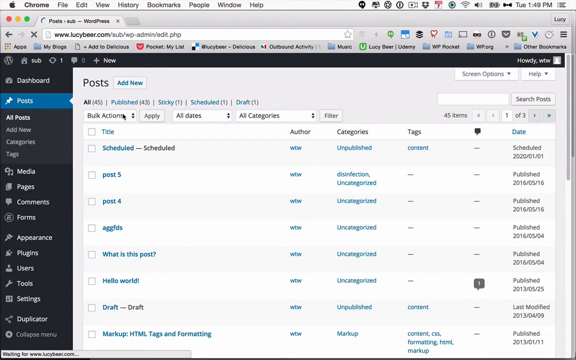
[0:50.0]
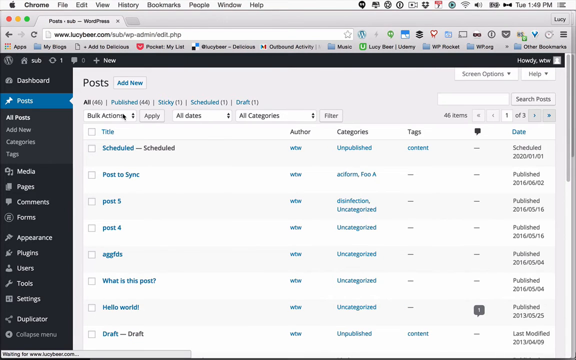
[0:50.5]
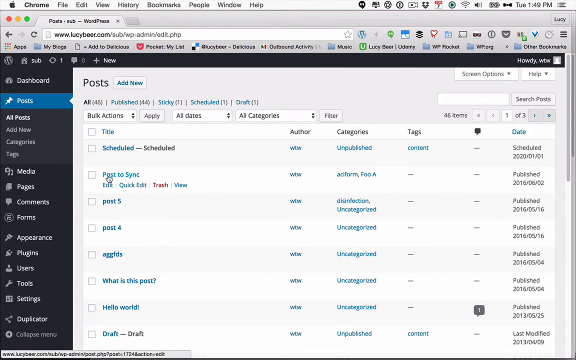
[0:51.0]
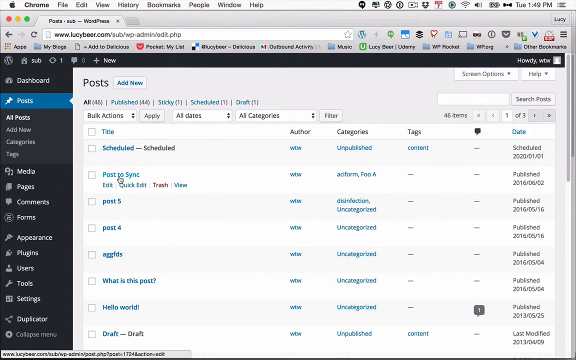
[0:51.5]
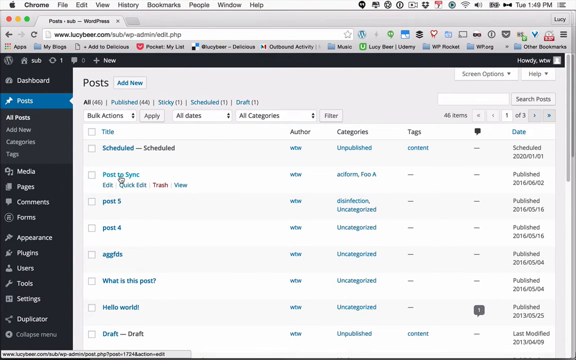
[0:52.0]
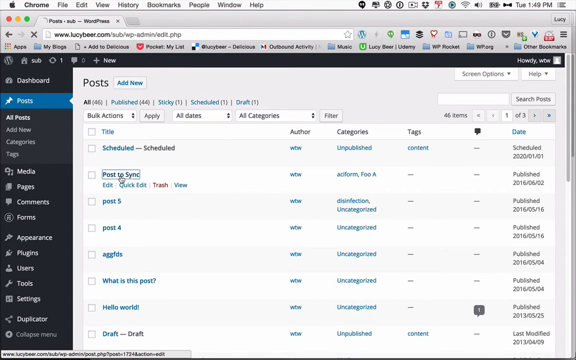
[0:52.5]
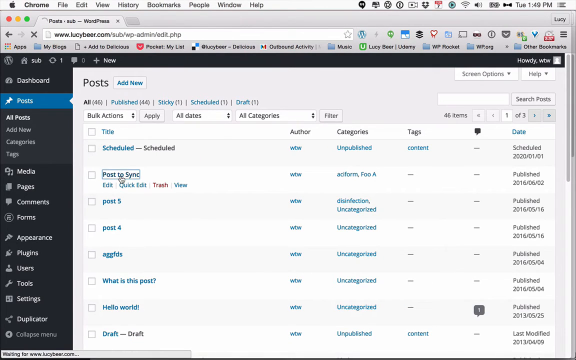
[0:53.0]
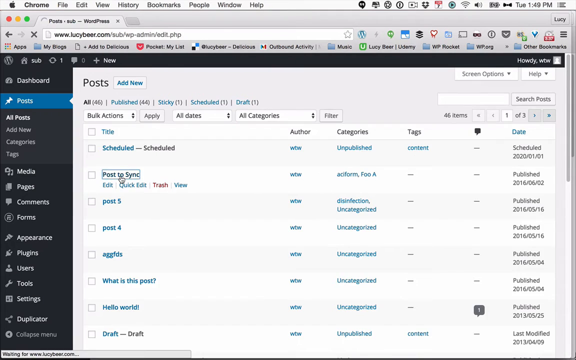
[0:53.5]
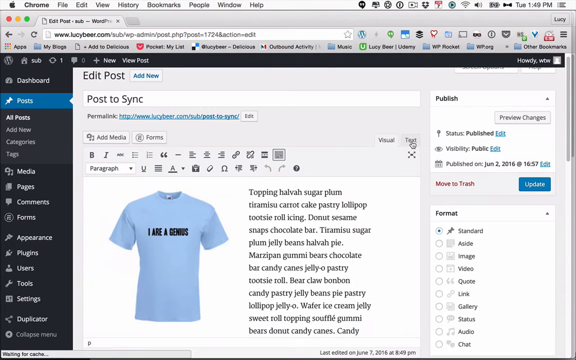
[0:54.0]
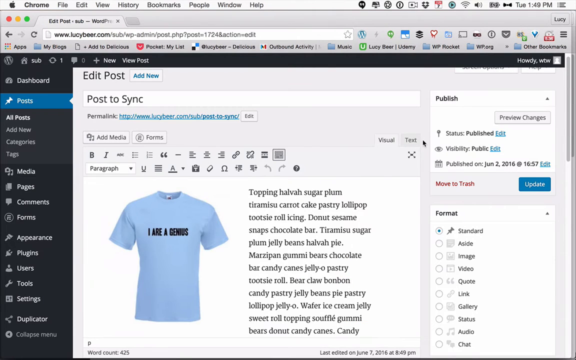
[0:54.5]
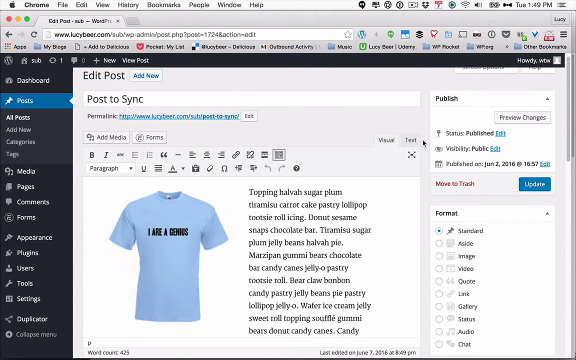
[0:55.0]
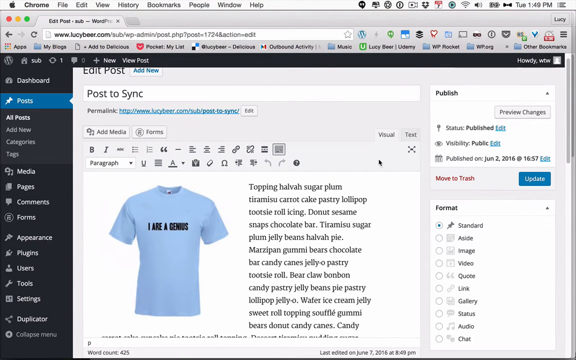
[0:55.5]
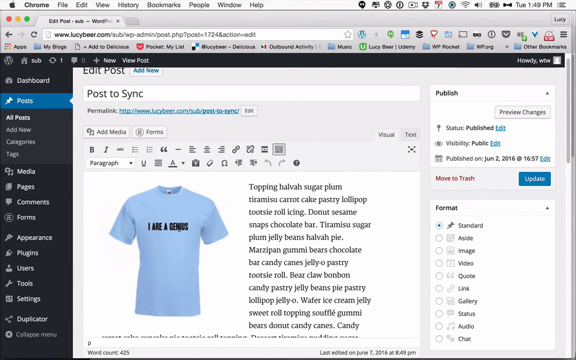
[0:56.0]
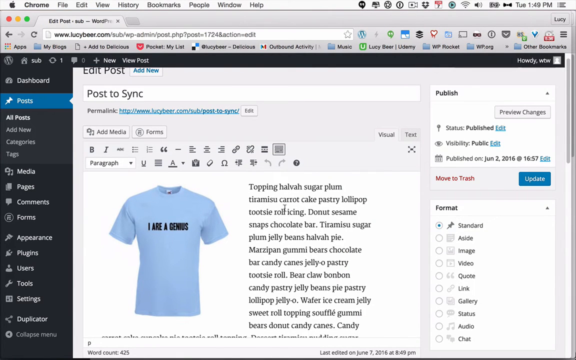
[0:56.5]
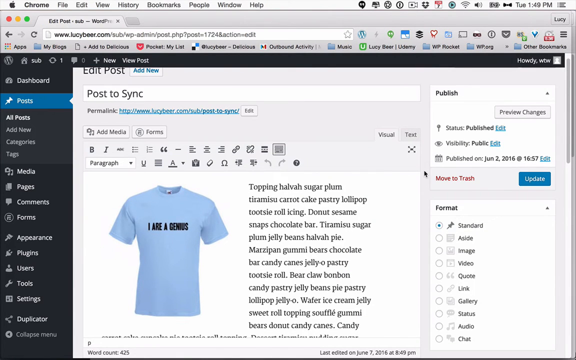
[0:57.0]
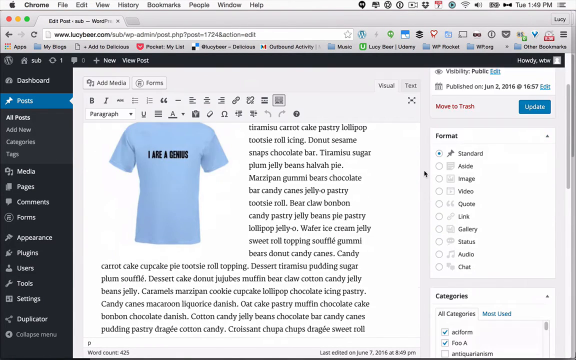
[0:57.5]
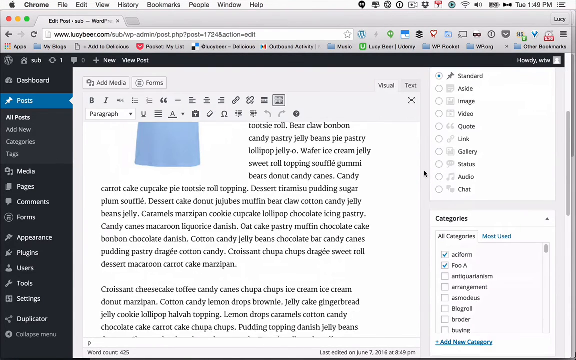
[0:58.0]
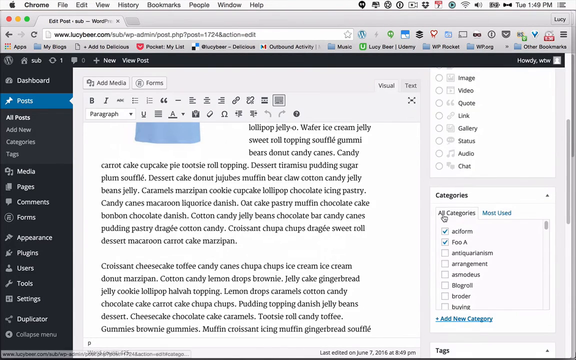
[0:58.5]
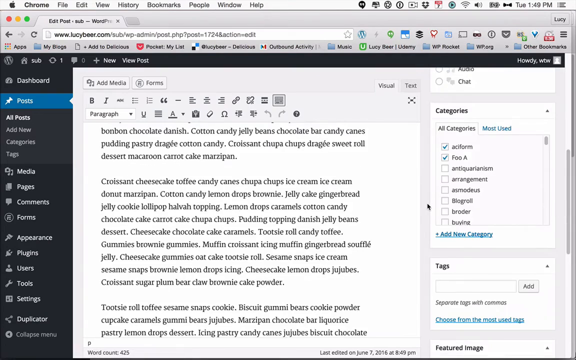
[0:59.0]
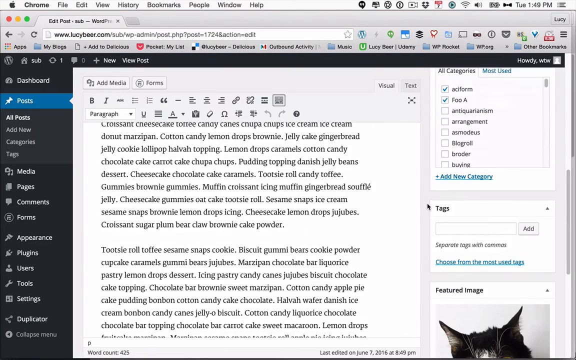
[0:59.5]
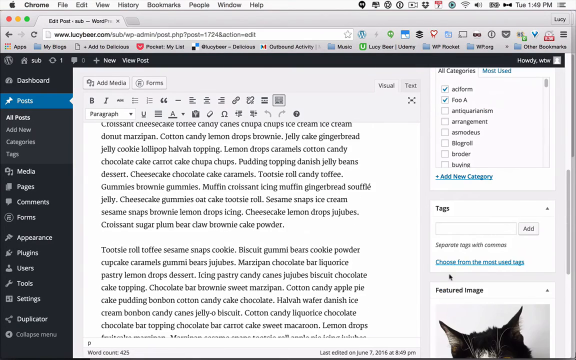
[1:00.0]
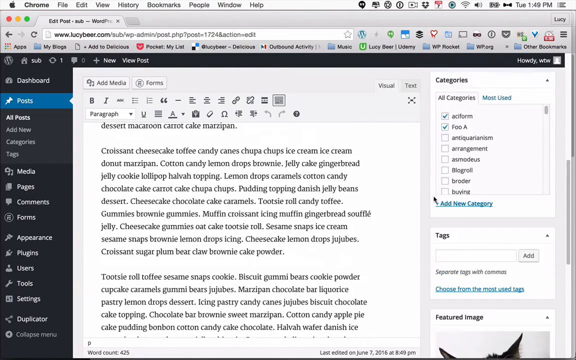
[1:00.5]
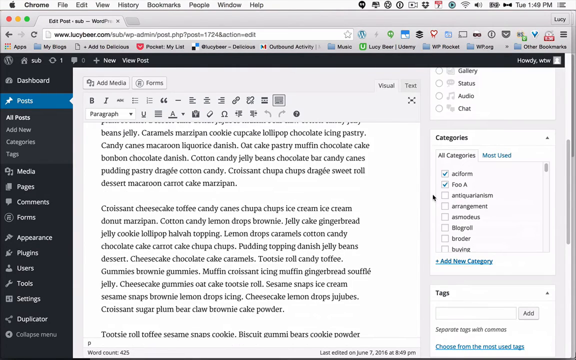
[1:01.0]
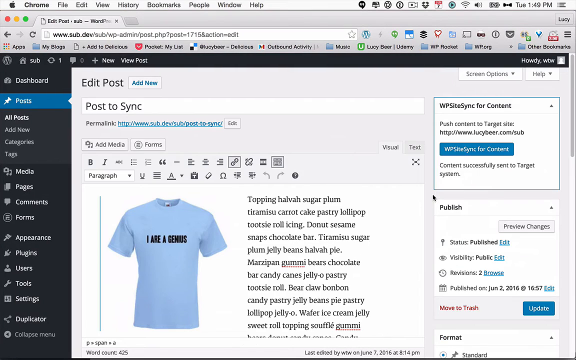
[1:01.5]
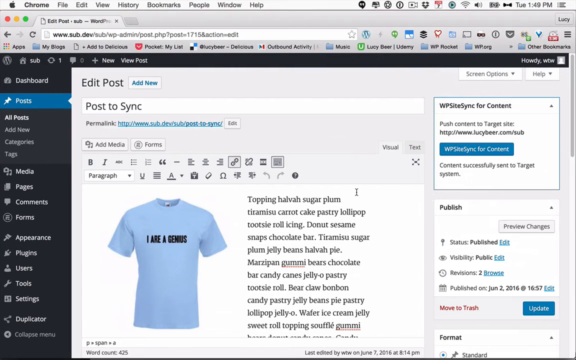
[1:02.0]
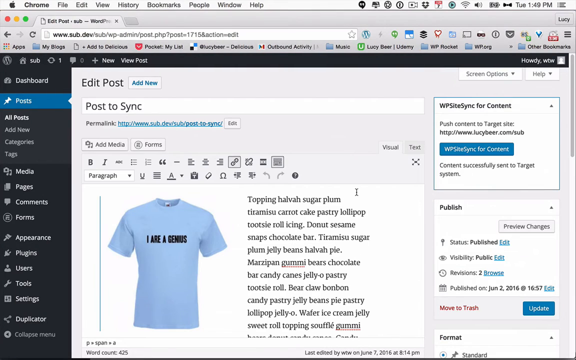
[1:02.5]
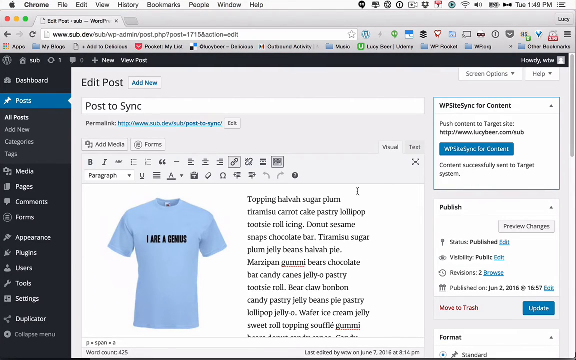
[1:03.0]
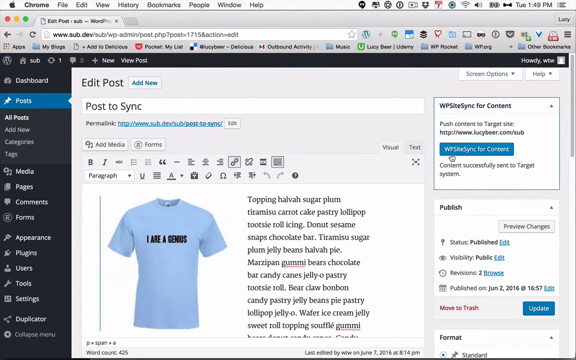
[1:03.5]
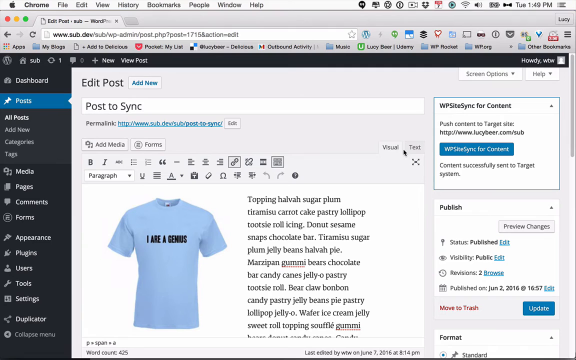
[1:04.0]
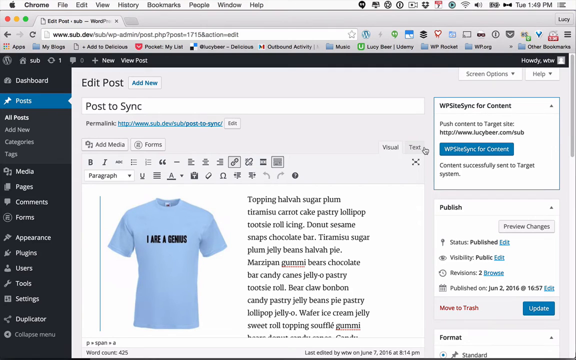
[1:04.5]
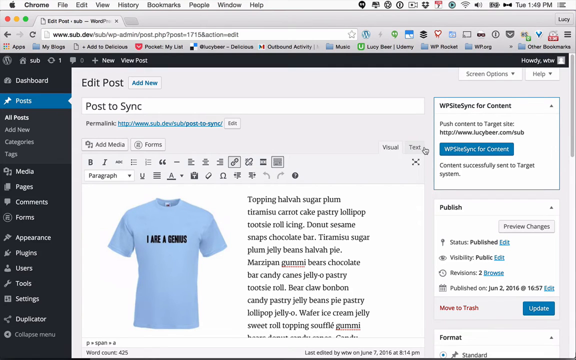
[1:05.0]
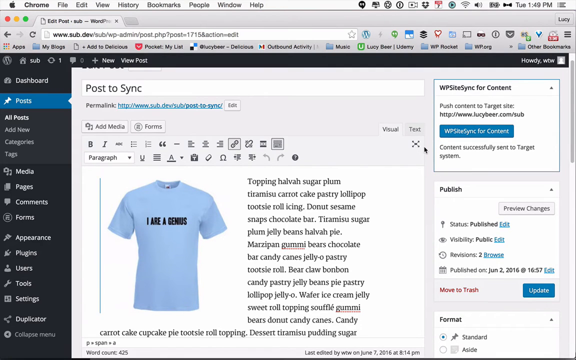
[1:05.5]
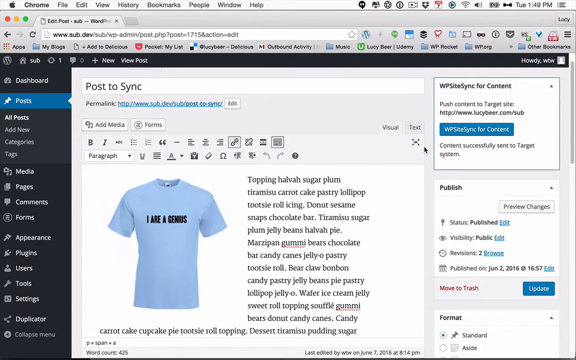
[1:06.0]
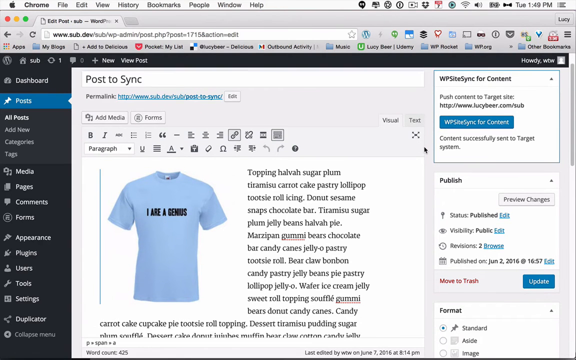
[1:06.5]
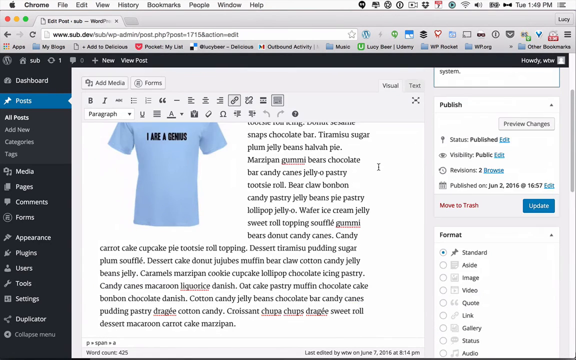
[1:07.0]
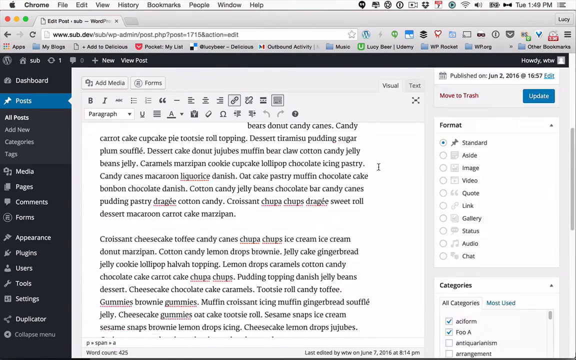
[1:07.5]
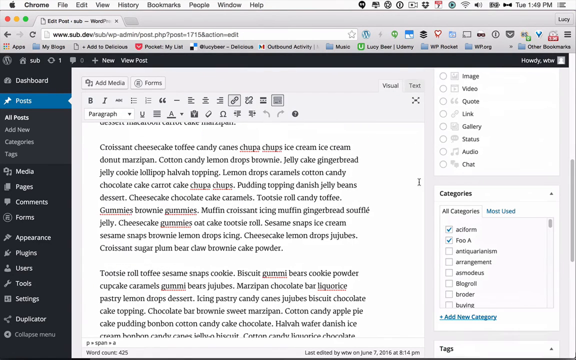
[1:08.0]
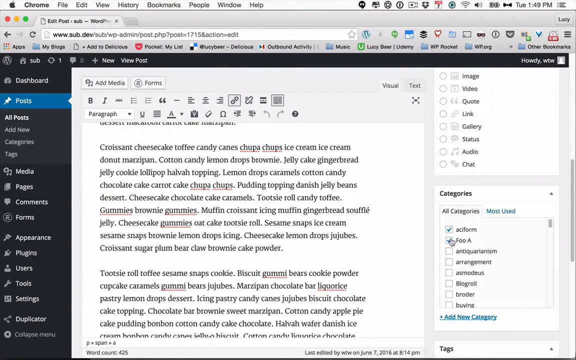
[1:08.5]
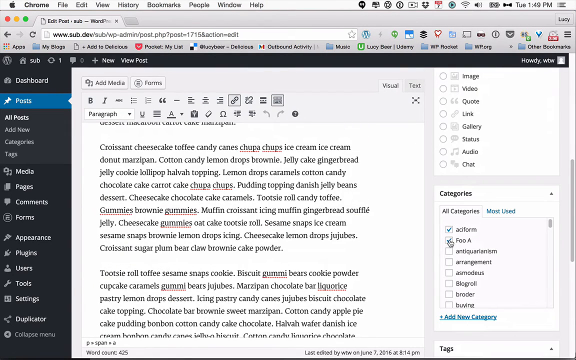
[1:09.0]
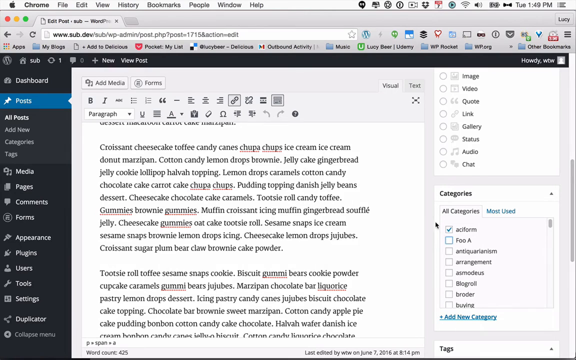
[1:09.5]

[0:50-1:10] On the same site, a "Post to Sync" link is visible. He clicks a button, which brings up a light blue T-shirt that says "I are a genius." It seems to be about naming different T-shirts, though he has not changed anything yet. He scrolls up and down. The background has many blue clickable links, but he clicks only "Post to Sync." The cat pops its nose out in the bottom right-hand portion; it is half black and half white on both its face and body.